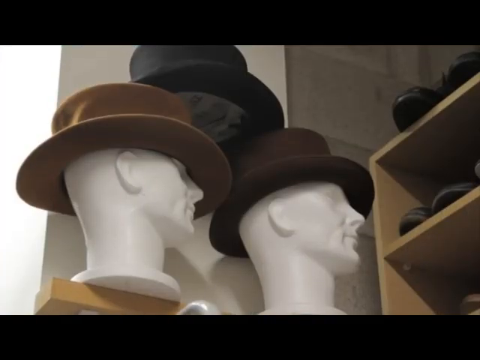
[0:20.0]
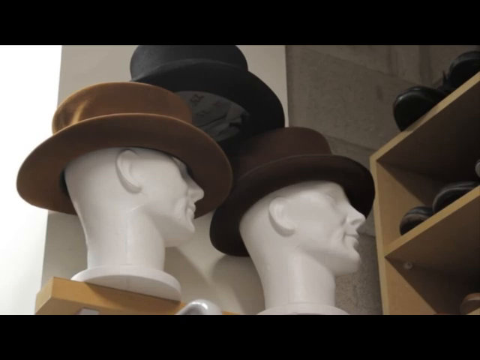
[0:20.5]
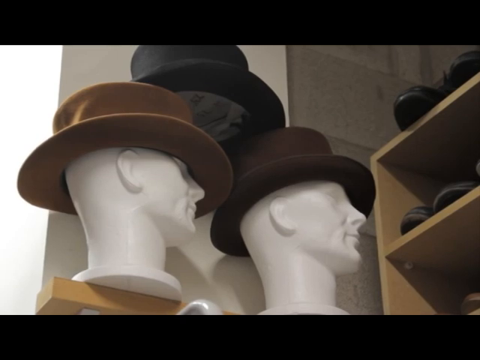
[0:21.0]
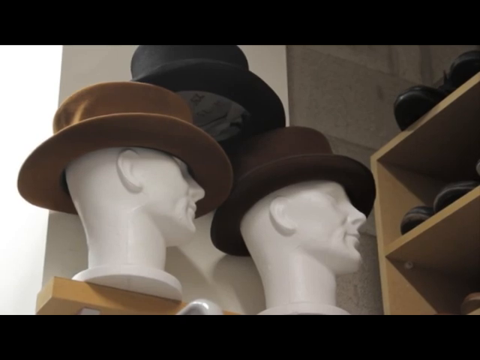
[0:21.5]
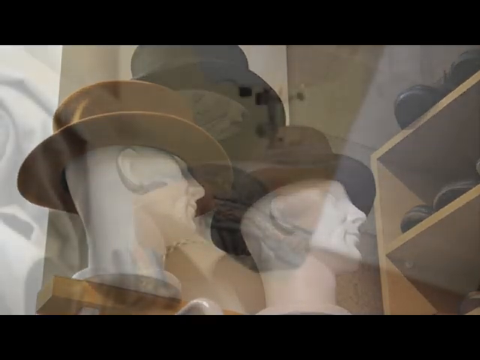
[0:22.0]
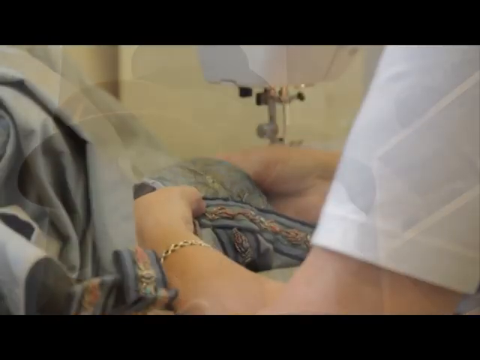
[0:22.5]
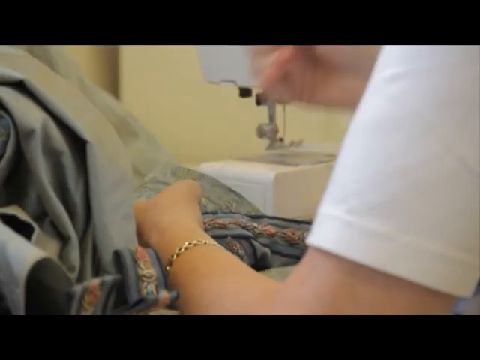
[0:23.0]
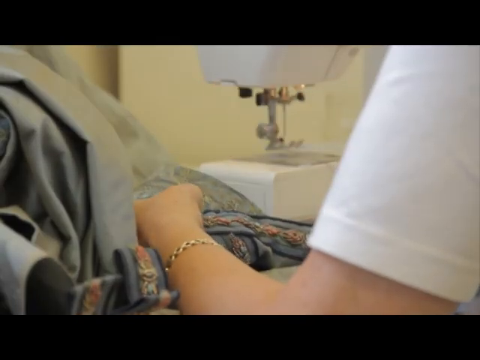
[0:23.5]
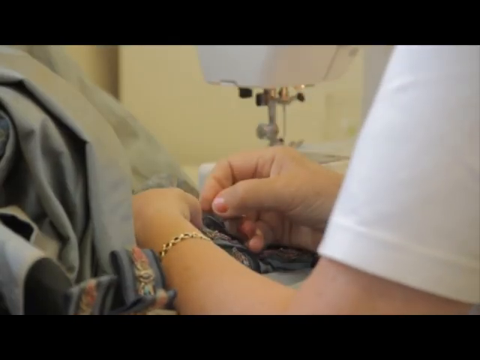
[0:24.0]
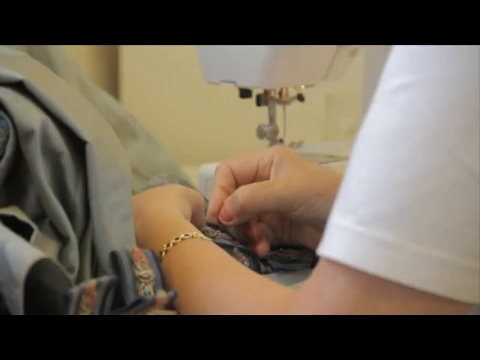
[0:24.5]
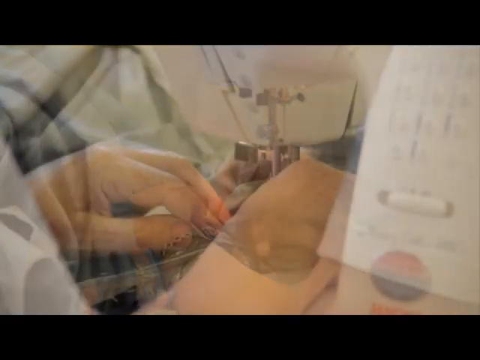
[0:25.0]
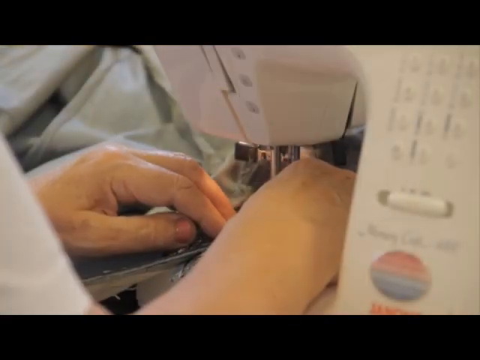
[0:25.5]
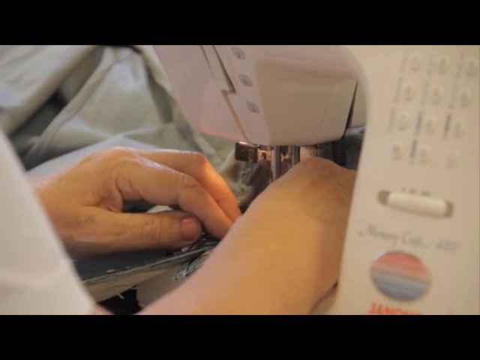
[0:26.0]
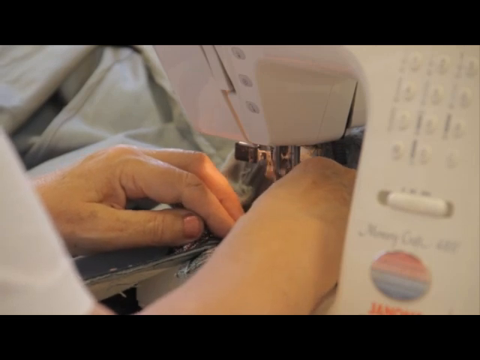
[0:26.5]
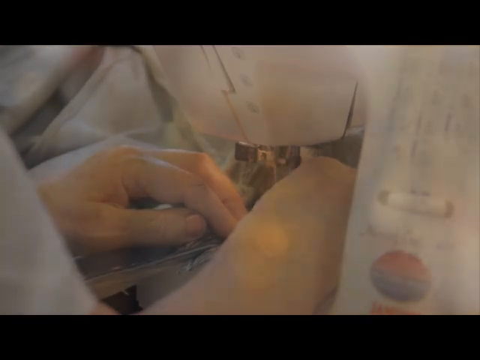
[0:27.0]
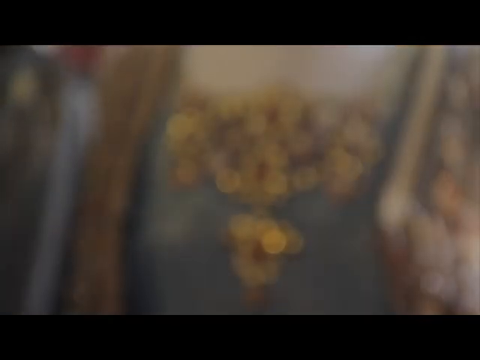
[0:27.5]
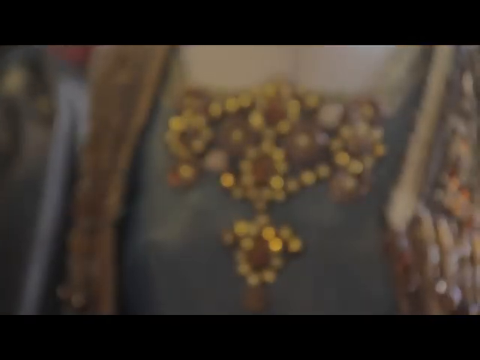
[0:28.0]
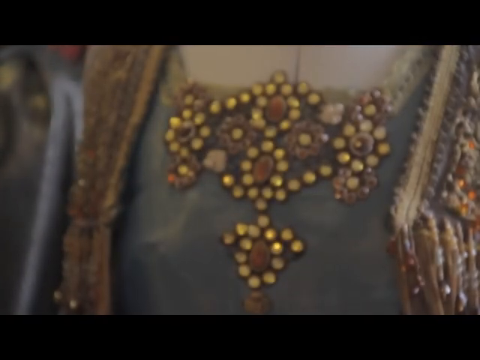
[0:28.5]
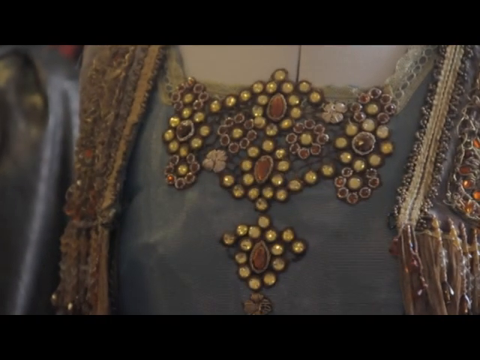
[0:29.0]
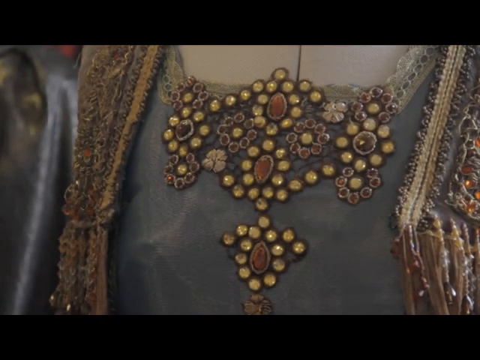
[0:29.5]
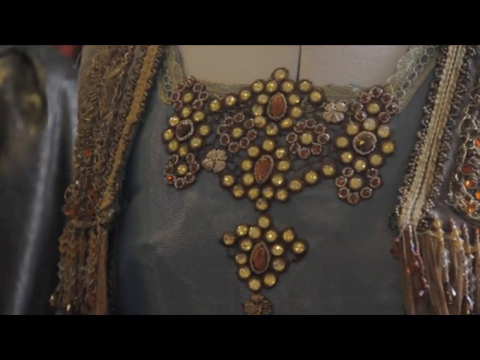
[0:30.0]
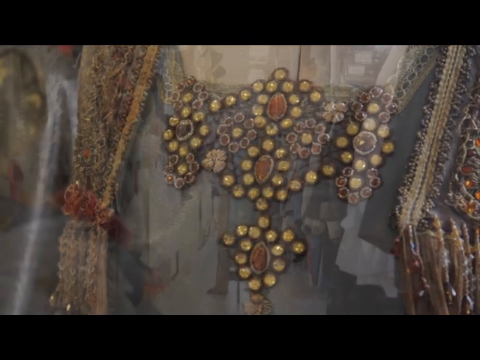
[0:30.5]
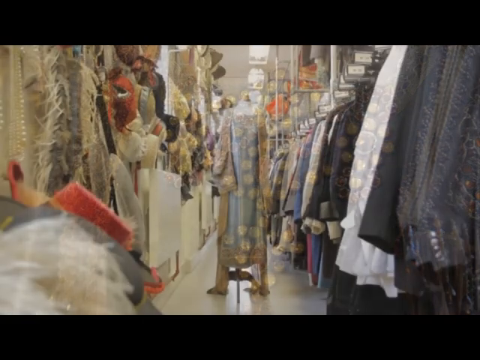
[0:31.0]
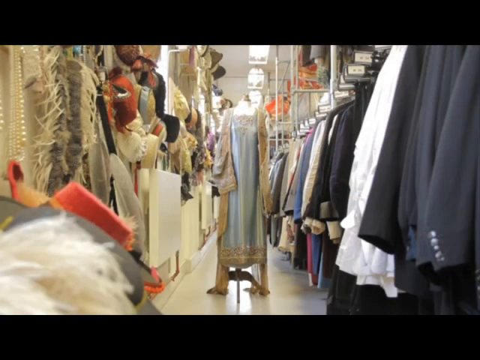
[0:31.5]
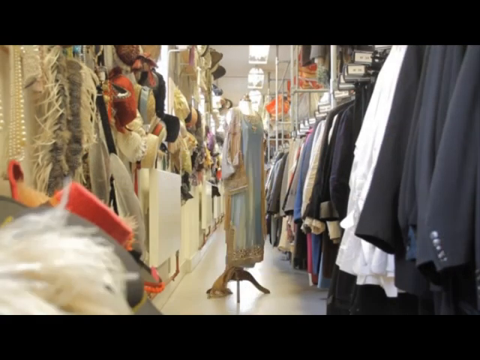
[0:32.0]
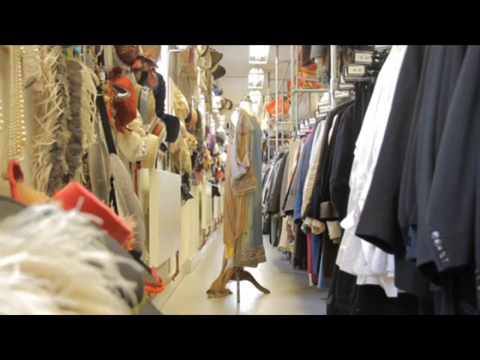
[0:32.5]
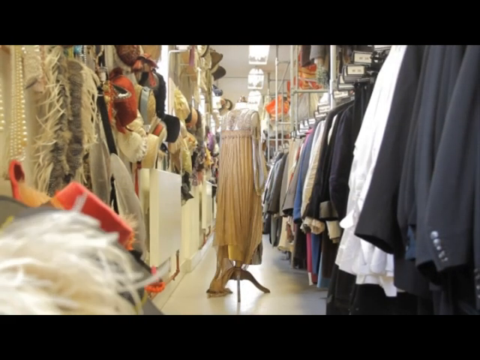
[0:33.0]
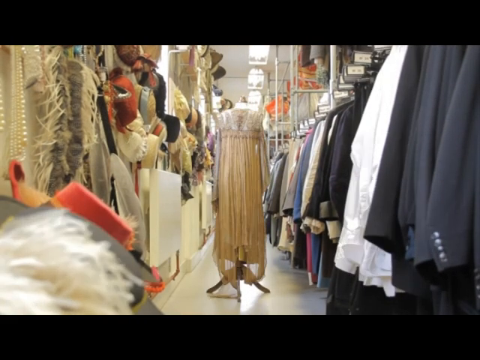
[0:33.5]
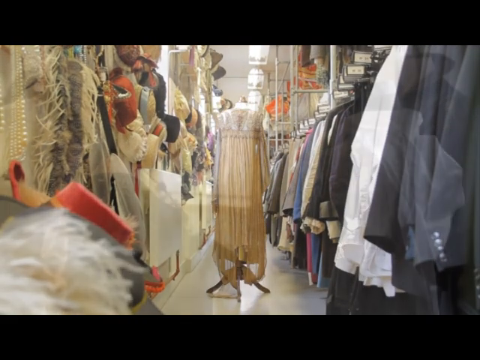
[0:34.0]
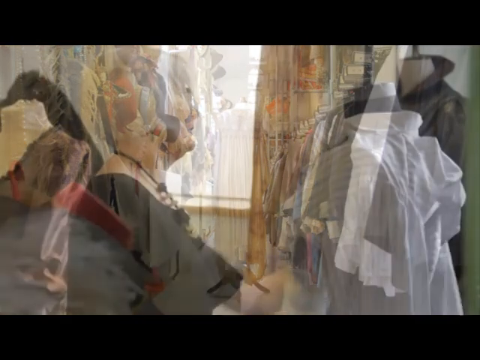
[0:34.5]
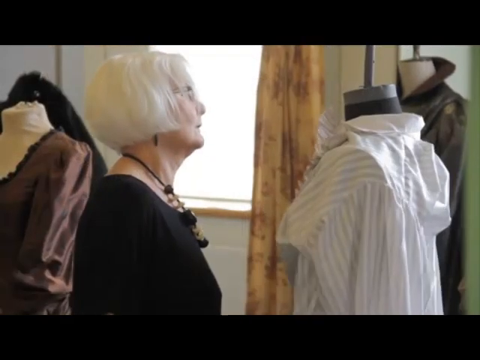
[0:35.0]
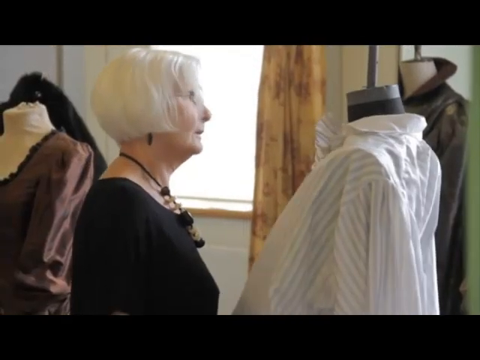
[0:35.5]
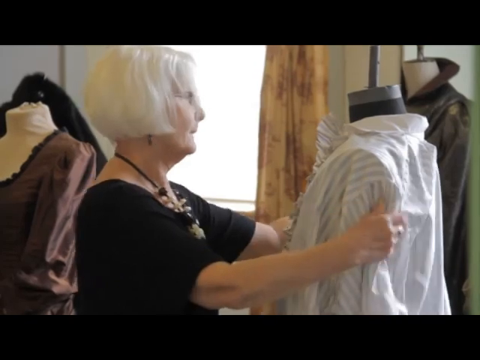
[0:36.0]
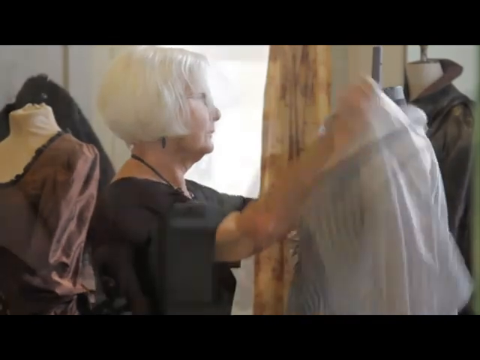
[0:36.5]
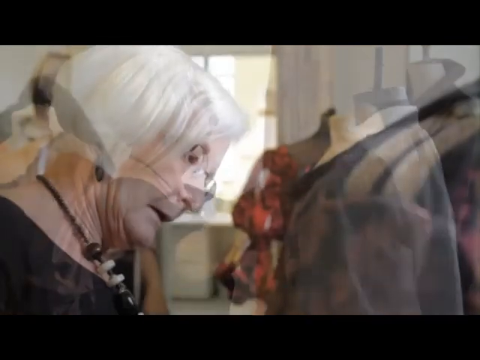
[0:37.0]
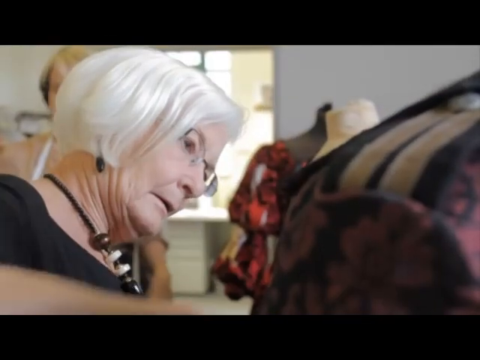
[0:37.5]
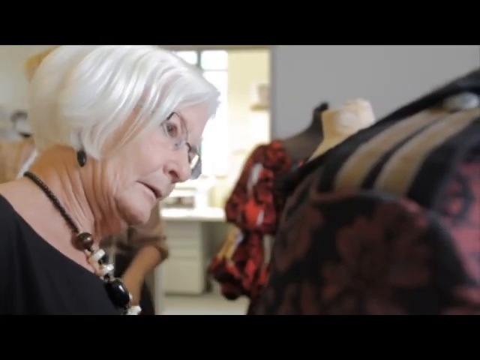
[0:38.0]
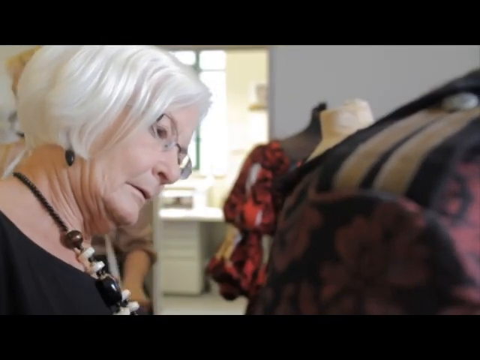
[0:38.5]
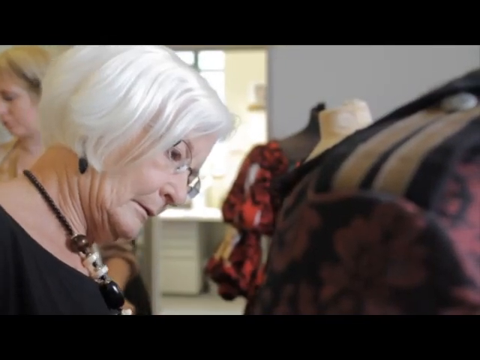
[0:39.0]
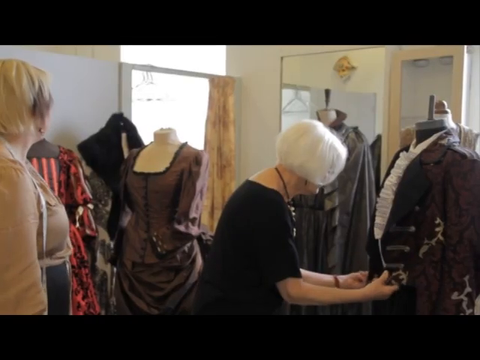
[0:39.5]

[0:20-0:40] The camera focuses briefly on mannequins wearing black and brown men's hats before the screen changes to a seamstress working on a costume piece. She is hand sewing at first, and then she is shown using a sewing machine. A close-up shows a bejeweled bodice of a dress with jewels of many different colors and sizes. Next, an aisle of costumes appears with a stand in the center holding a blue dress with a tan cape over the mannequin's shoulders, shown from various views. A lady then adjusts some sort of shirt on a mannequin; she wears a black shirt, has white hair, and wears a necklace and earrings. She drapes material over a mannequin, and after the screen changes she is working on a fancy suit coat on a mannequin.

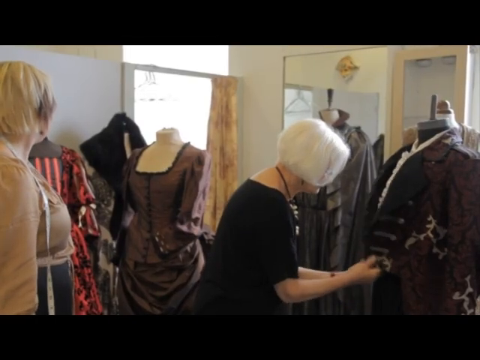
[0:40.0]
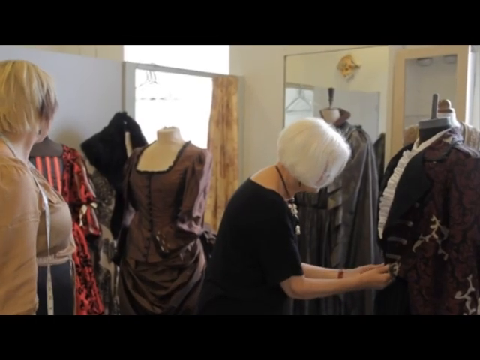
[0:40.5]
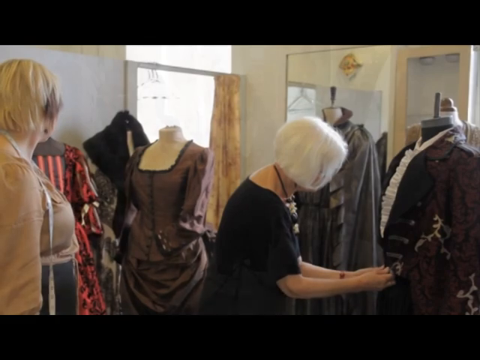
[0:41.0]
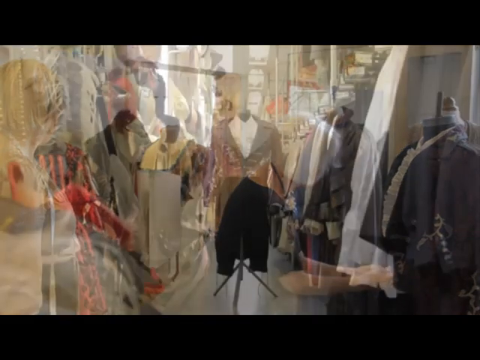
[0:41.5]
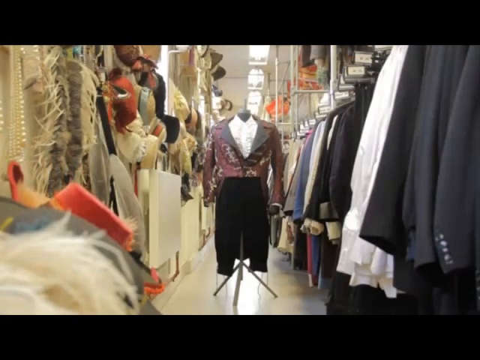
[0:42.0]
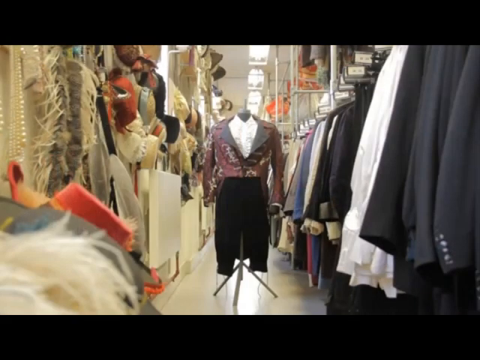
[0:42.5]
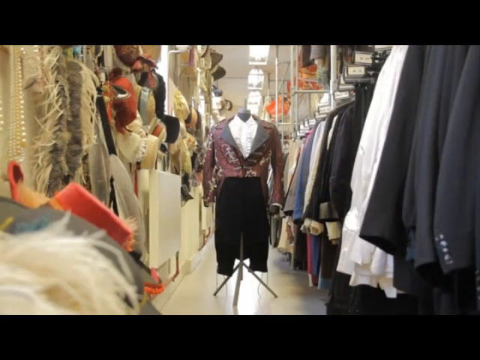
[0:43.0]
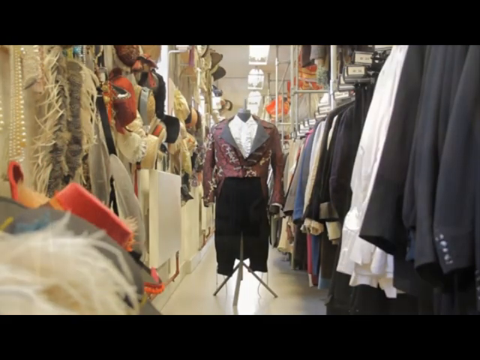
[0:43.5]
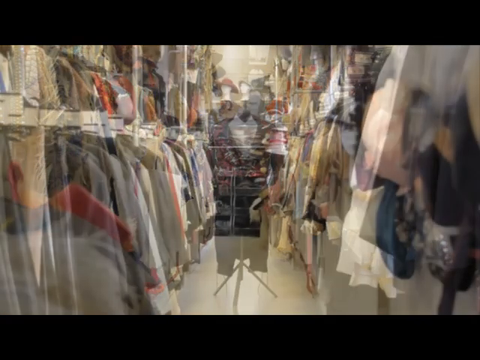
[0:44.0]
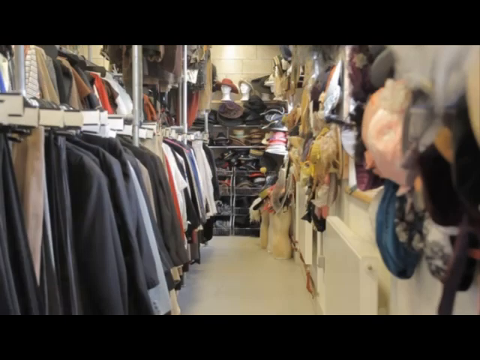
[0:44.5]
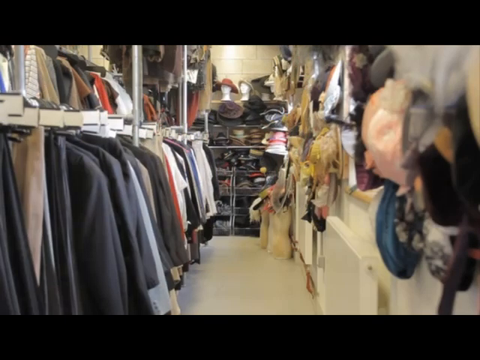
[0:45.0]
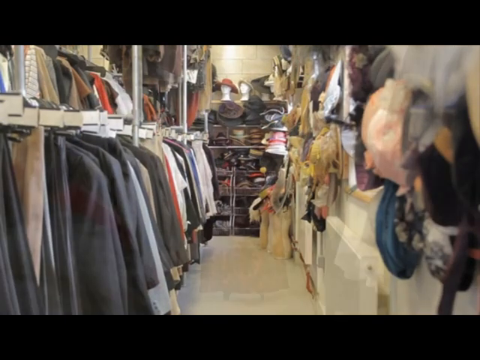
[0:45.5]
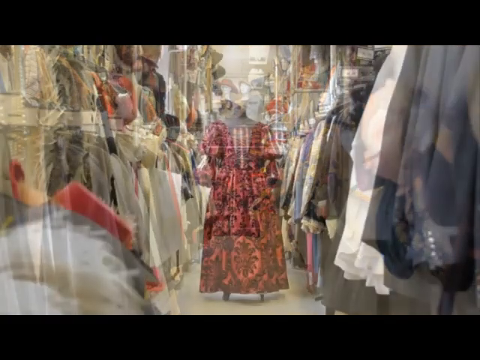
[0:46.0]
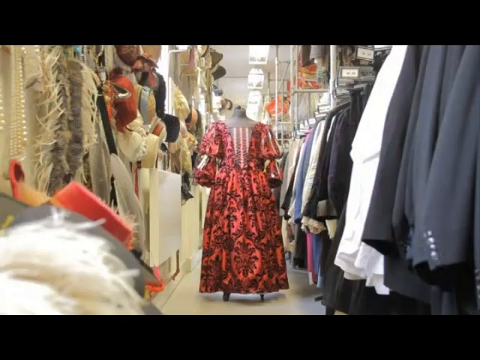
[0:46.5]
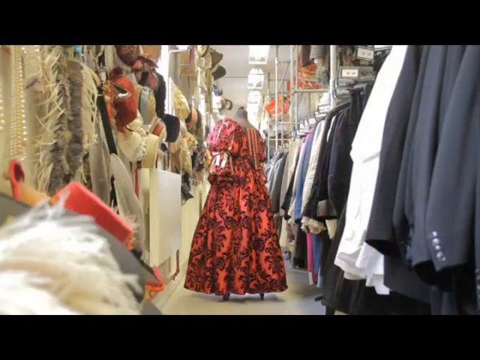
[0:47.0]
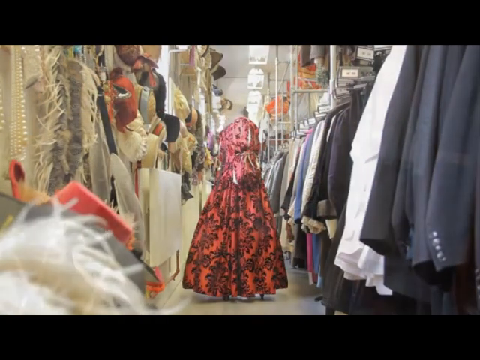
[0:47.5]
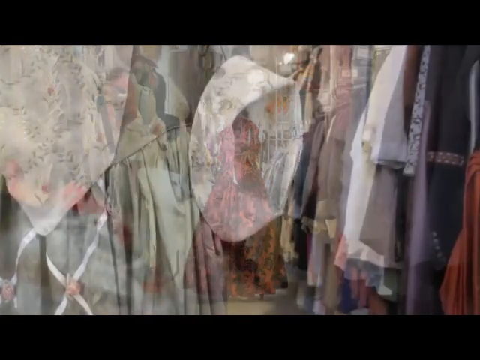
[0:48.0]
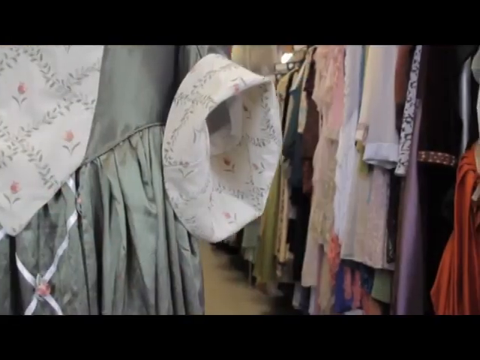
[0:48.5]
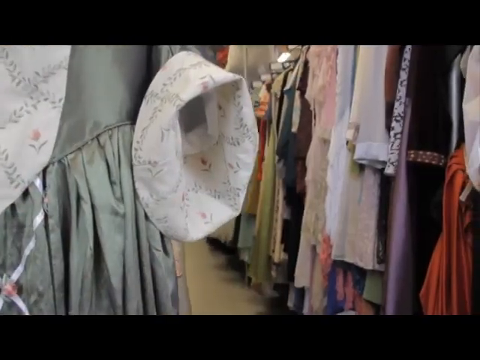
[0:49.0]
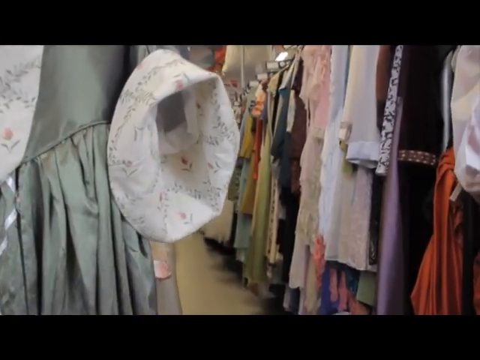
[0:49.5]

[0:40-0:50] The lady continues adjusting the coat, and then the whole costume is shown in the center of the aisle: a purplish old-fashioned men's coat over a white ruffled shirt, with black pants that stop just below the knee. The screen changes to another aisle, which looks like it has men's suit coats on one side, hats on the other side, and hats in the very background. Next, a large, poofy, red, old-fashioned woman's dress is shown from various angles in the center of an aisle. The camera then pans into a different aisle with lots and lots of old styles of women's dresses.